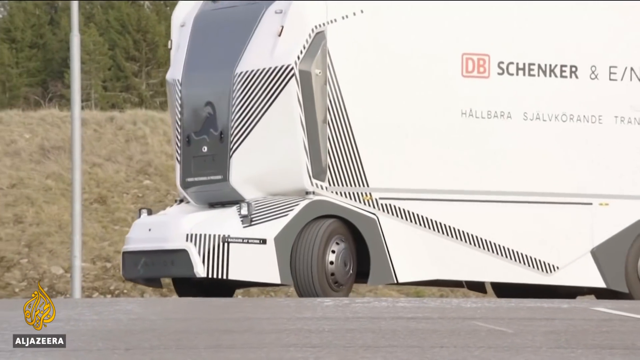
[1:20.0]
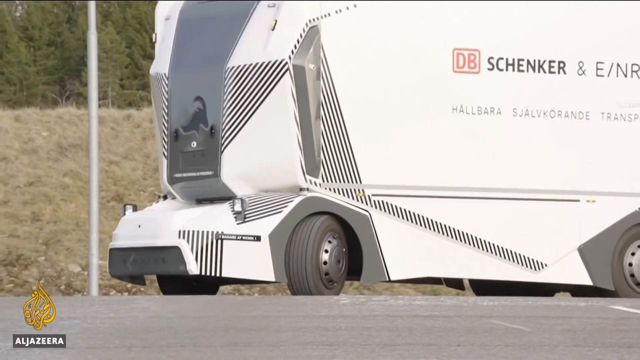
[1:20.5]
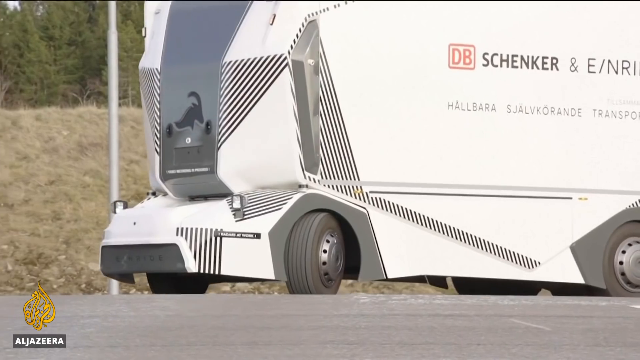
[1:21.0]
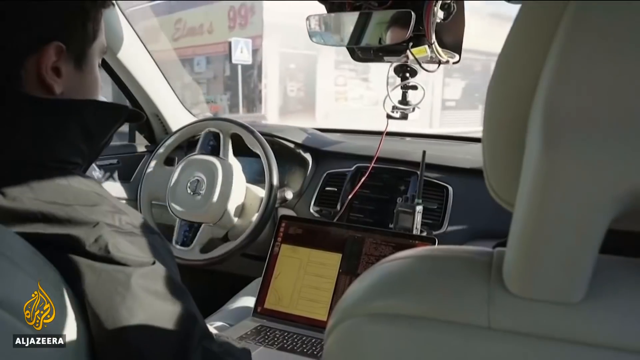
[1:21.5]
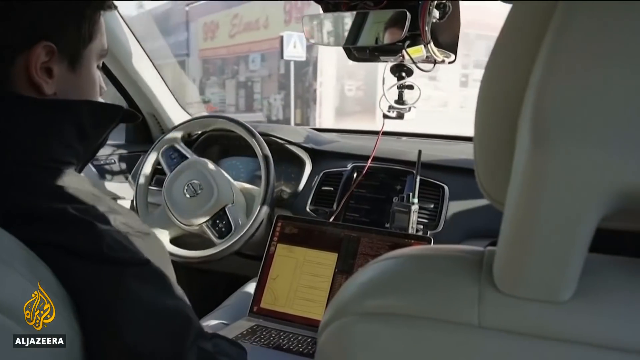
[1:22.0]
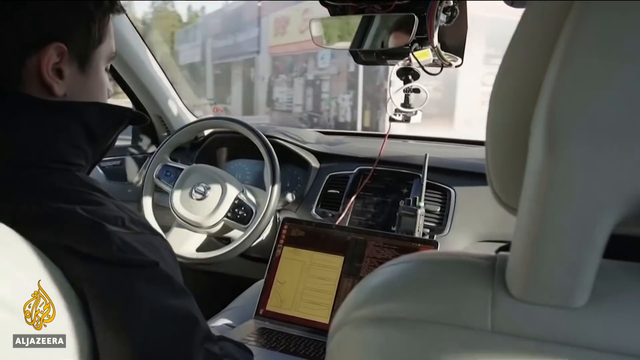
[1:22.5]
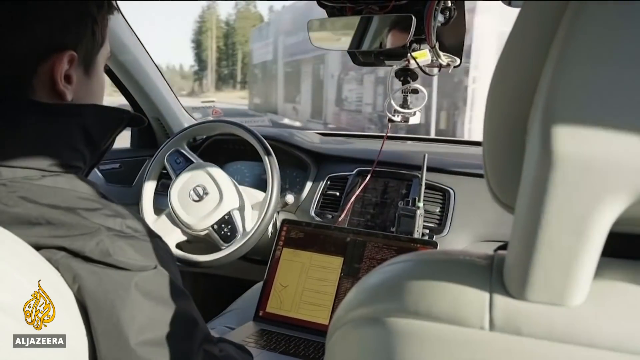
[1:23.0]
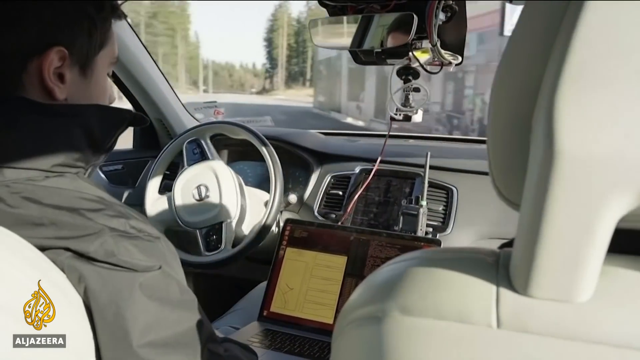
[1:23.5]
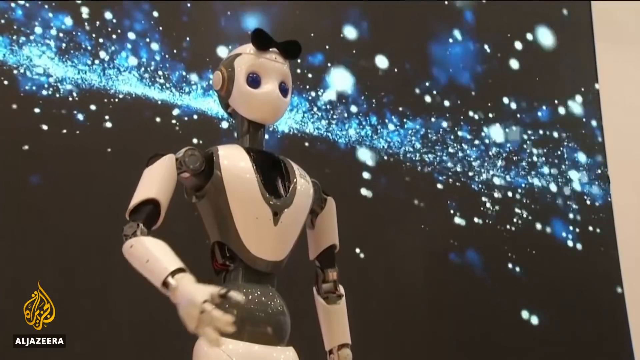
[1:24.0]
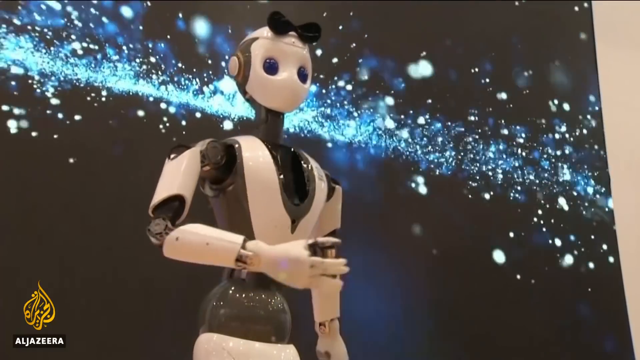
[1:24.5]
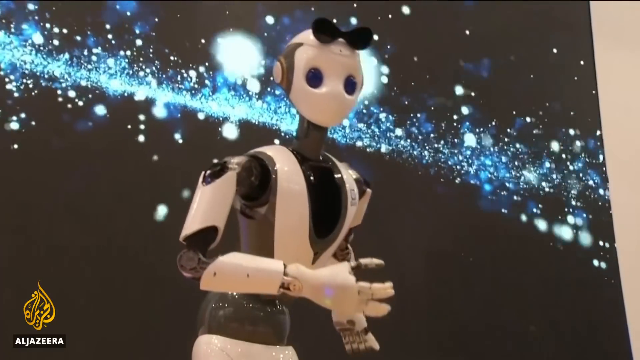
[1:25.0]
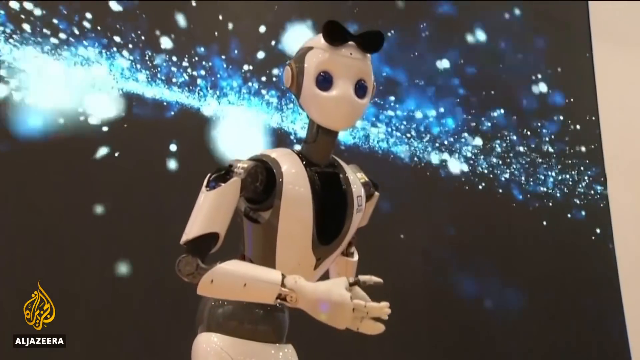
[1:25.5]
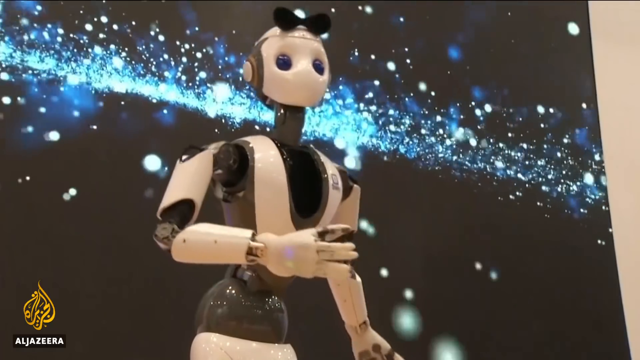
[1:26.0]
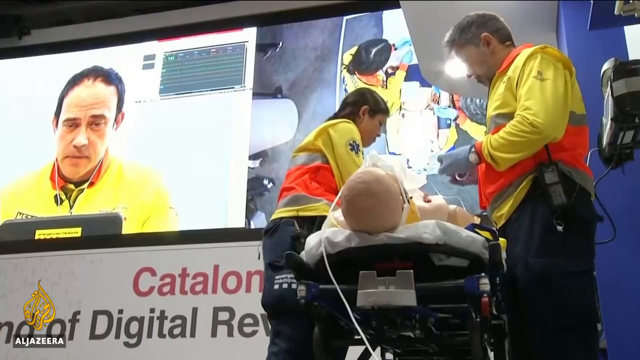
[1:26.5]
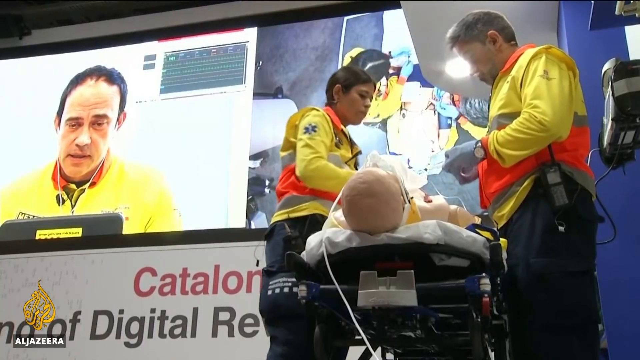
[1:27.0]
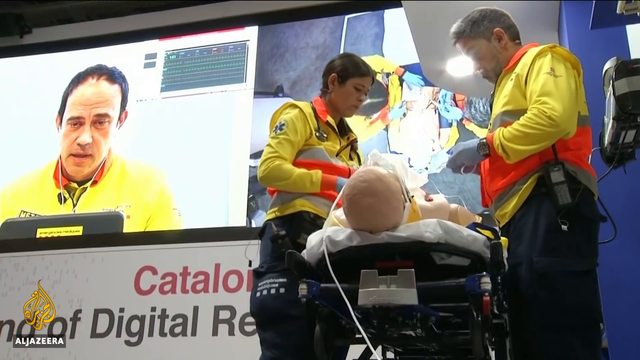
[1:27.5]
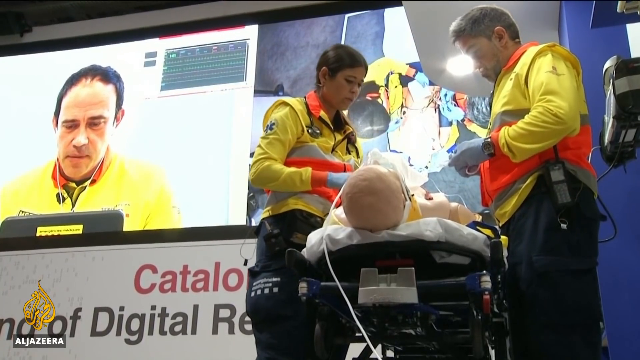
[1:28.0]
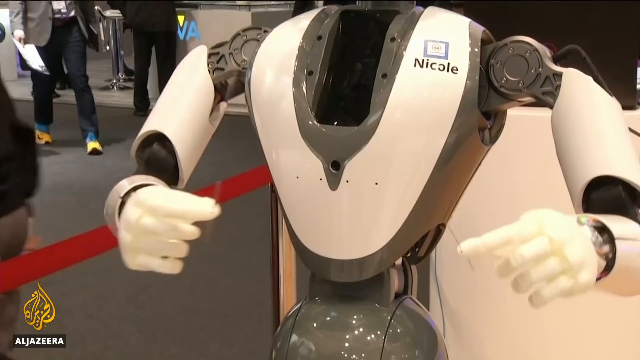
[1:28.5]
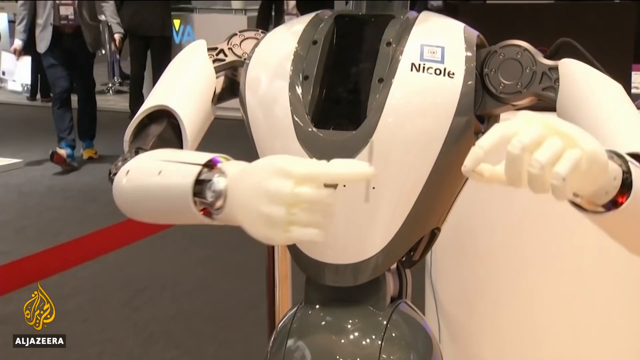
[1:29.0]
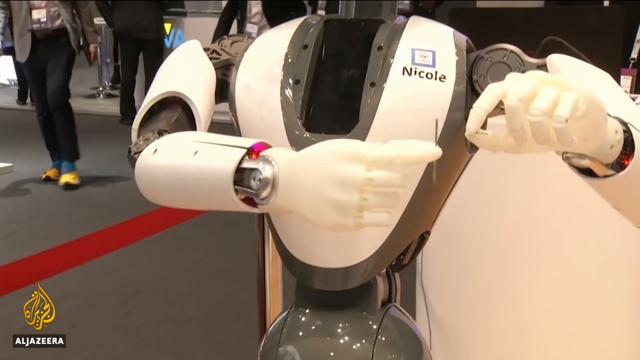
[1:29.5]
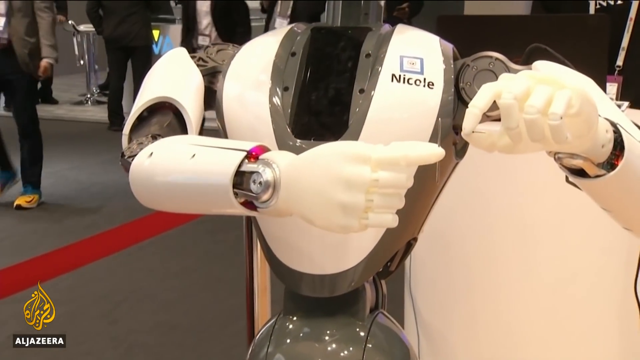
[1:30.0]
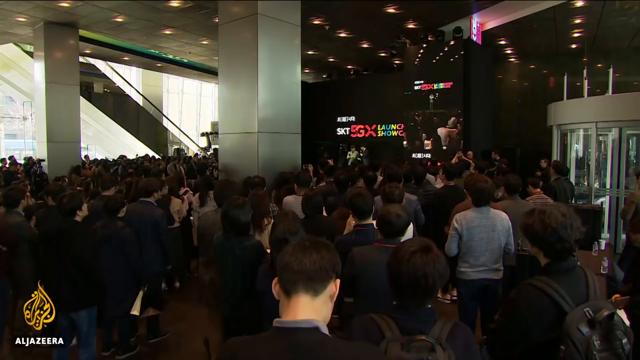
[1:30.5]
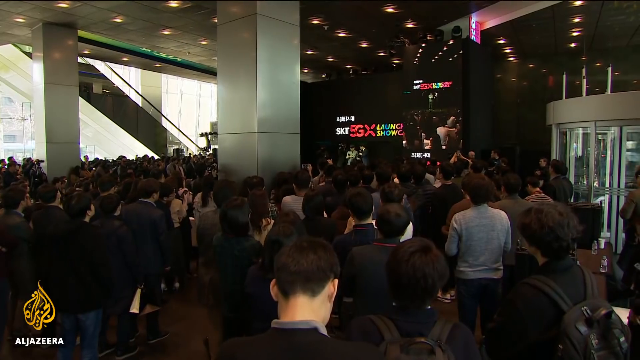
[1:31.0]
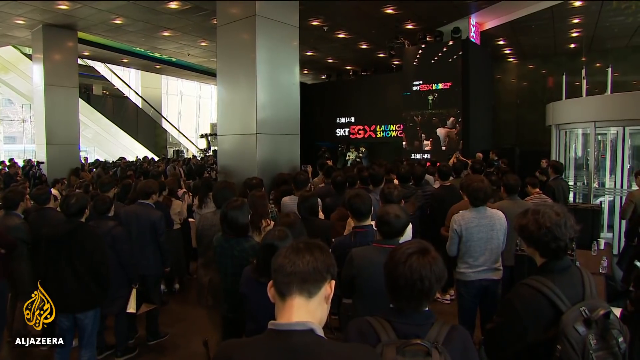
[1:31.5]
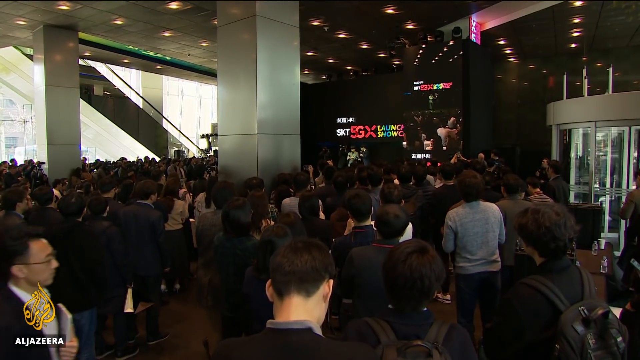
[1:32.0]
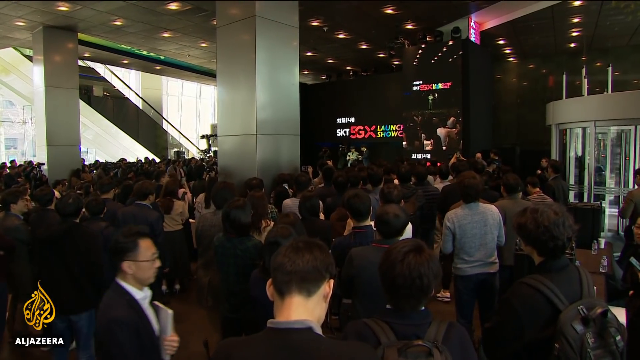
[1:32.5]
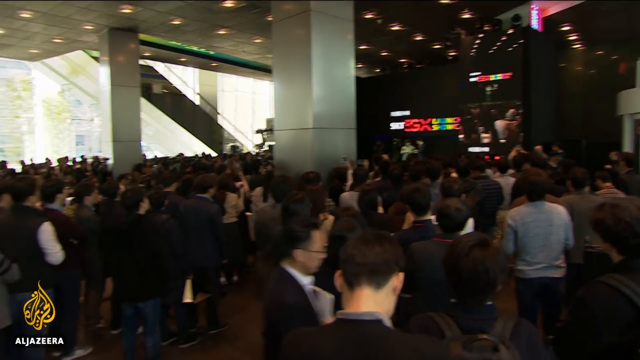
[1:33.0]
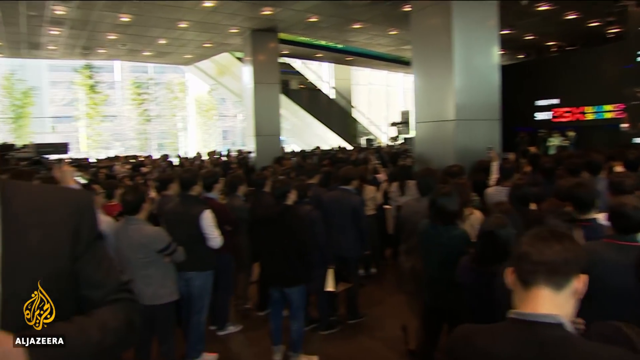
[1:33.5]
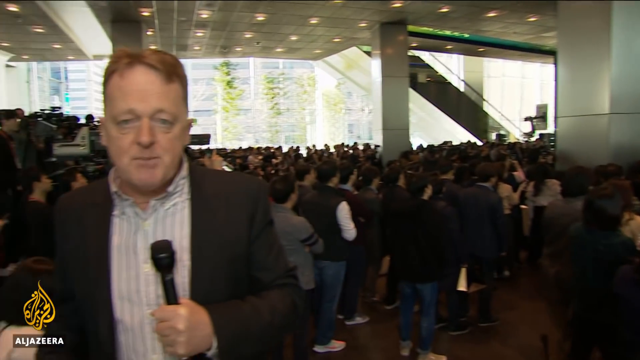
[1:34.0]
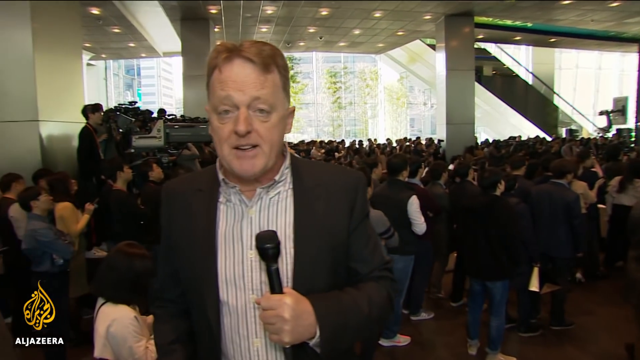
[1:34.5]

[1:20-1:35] A very large, futuristic-looking truck that says "D.B. Schenker" turns left in a wide open space. The camera pans to the inside of the truck, where a person is driving quickly, then quickly pans to what looks to be a robot. The robot is white and gray, slender and human-like in shape, with two blue eyes and no mouth. It is visible from the waist up as it stands on some sort of stage with a projected moving image of a galactic scene. The camera jumps to two paramedic-looking medical people in bright yellow and orange uniforms standing over a man on a stretcher, while next to them a large video screen shows another man in the same bright yellow clothing who looks to be giving them instructions as they care for the person on the stretcher. The camera pans back to the robot's torso, and its hand holds something small and pin-like in shape. The camera then shows a large crowd inside a convention space looking toward the stage, which says "SKT 5GX Launch Showcase." The camera pans left to a white man in a brown suit holding a microphone and speaking to the camera.